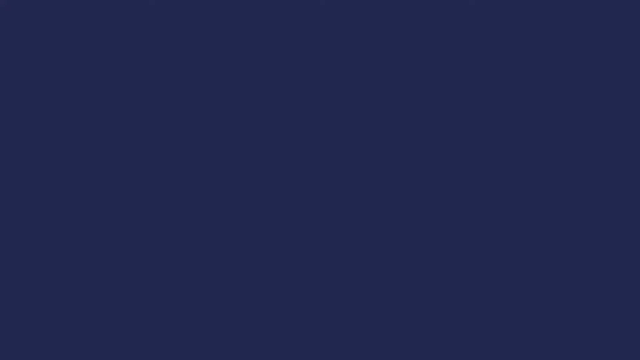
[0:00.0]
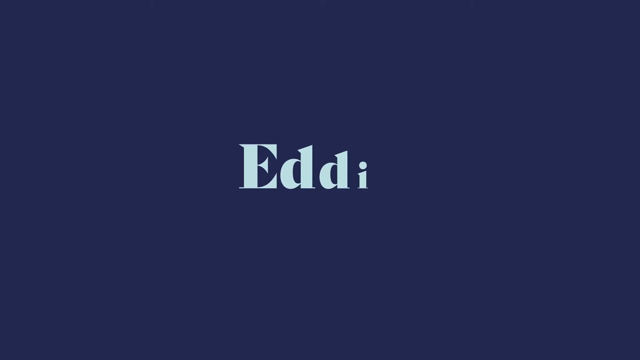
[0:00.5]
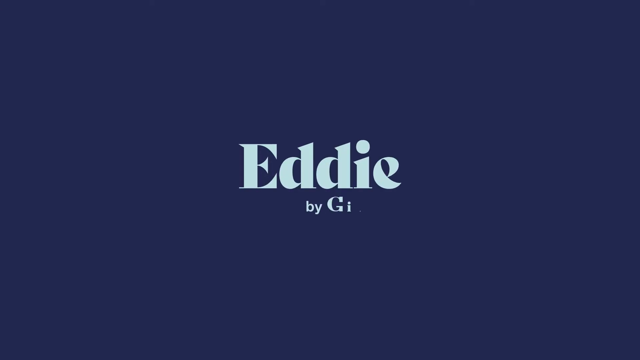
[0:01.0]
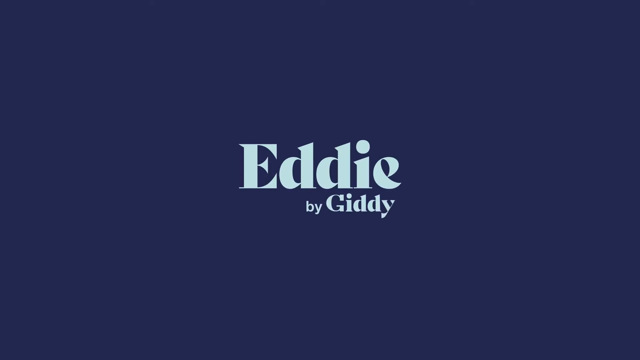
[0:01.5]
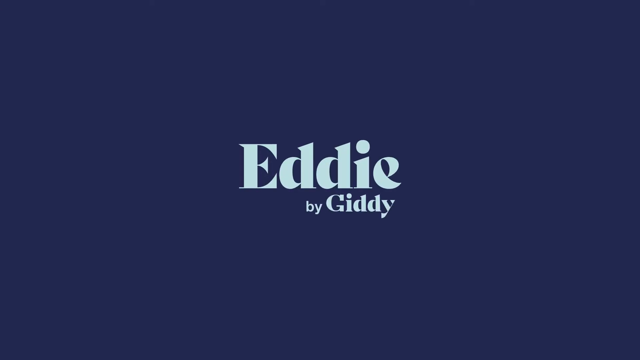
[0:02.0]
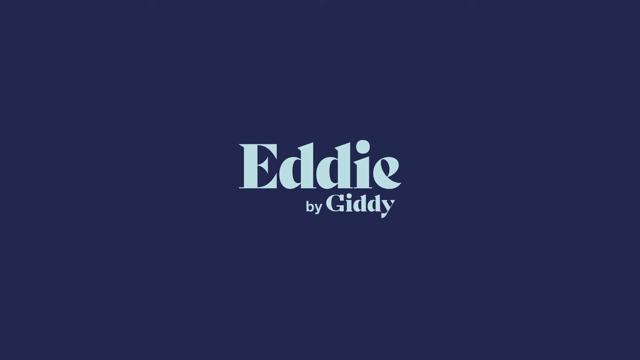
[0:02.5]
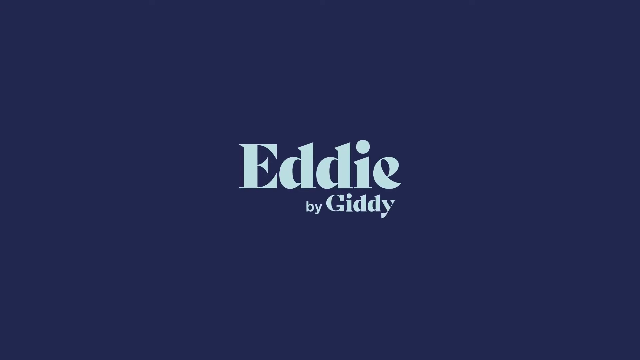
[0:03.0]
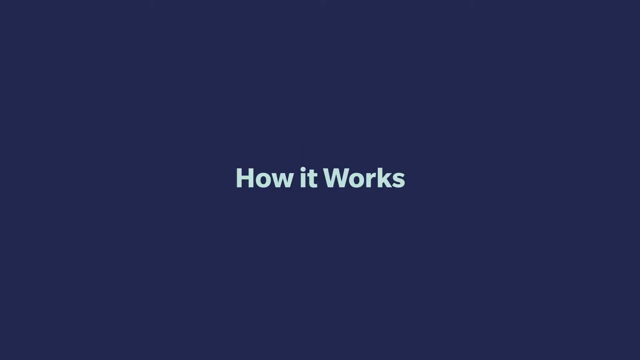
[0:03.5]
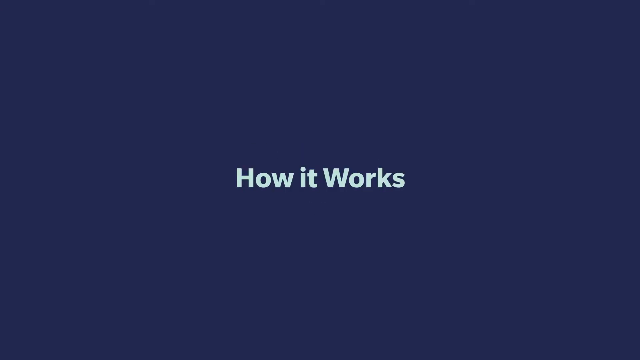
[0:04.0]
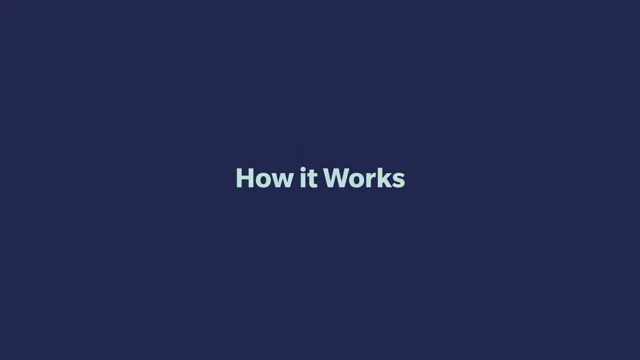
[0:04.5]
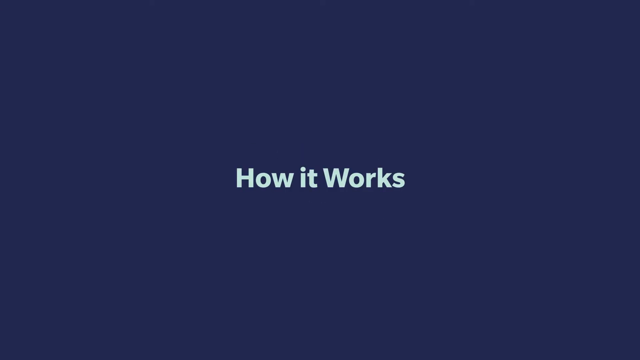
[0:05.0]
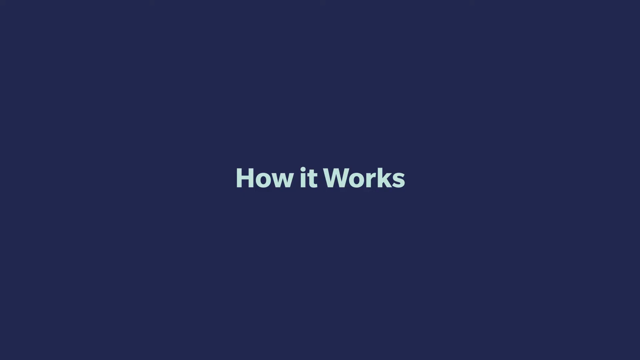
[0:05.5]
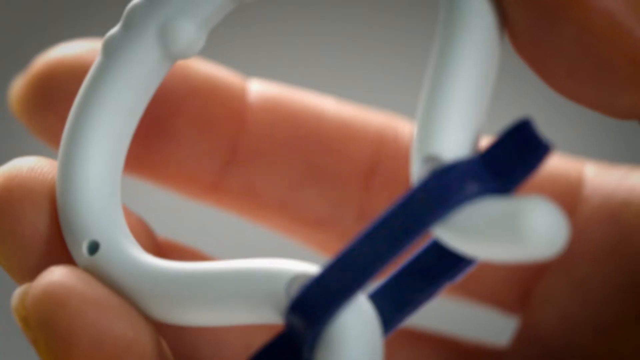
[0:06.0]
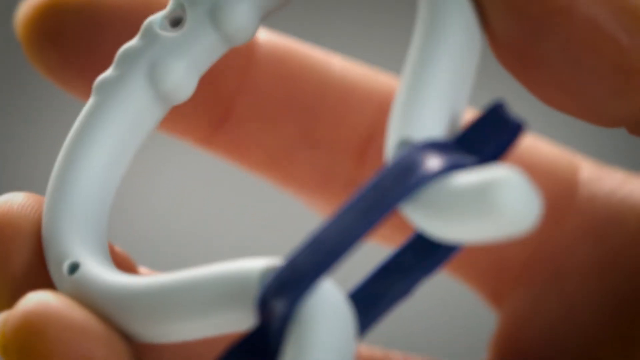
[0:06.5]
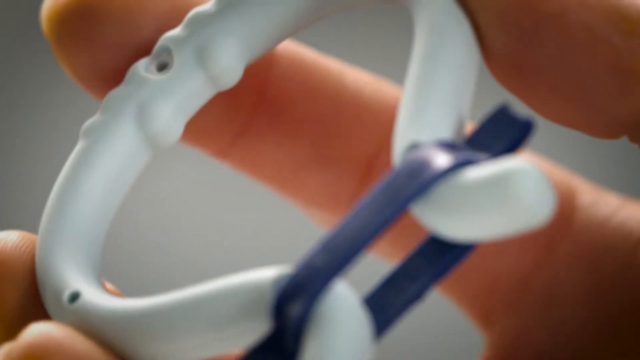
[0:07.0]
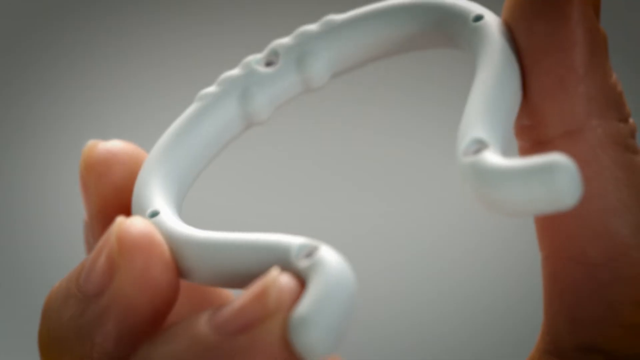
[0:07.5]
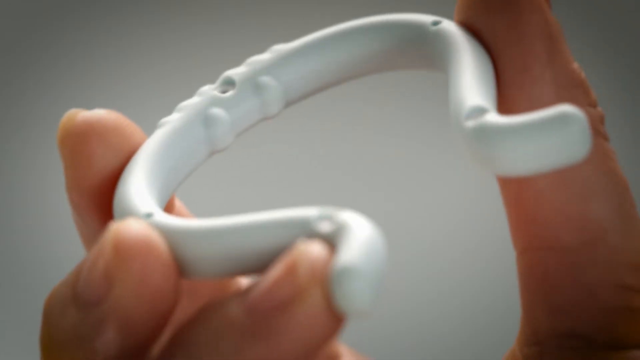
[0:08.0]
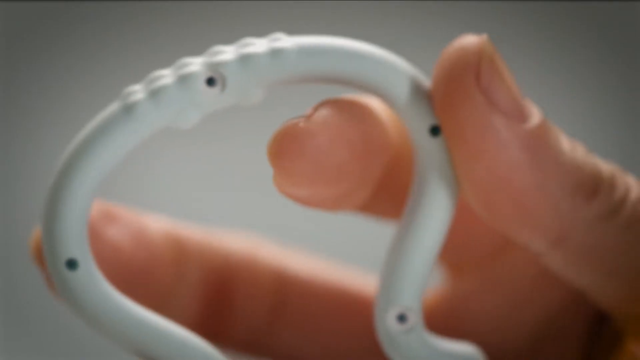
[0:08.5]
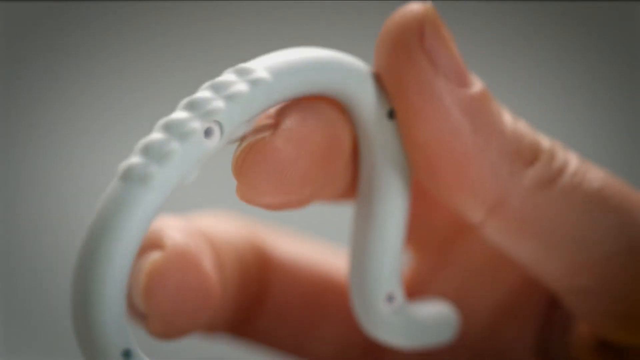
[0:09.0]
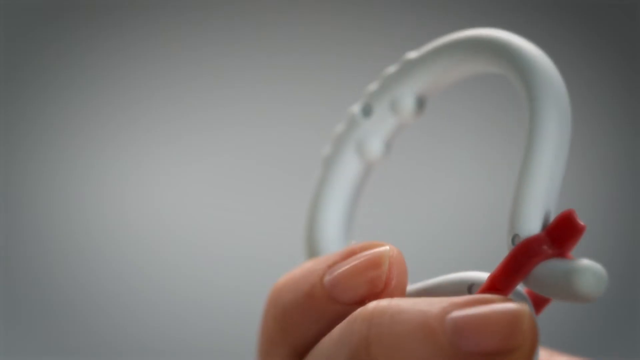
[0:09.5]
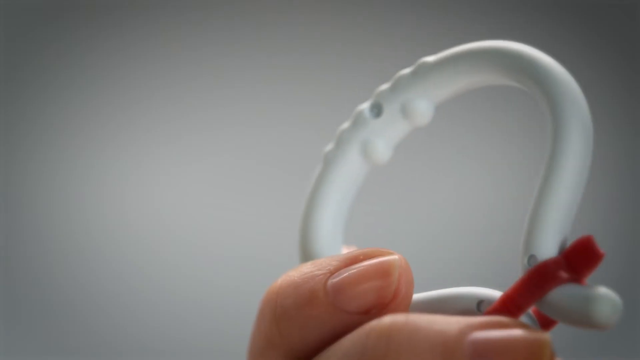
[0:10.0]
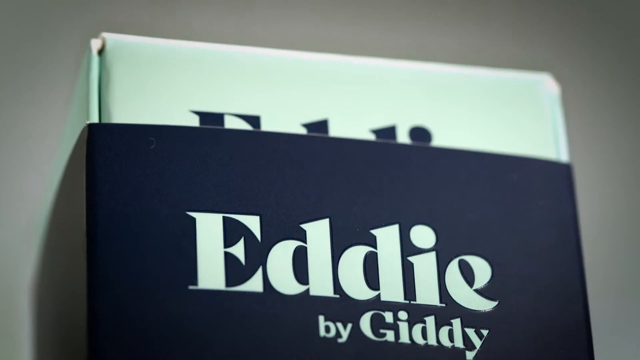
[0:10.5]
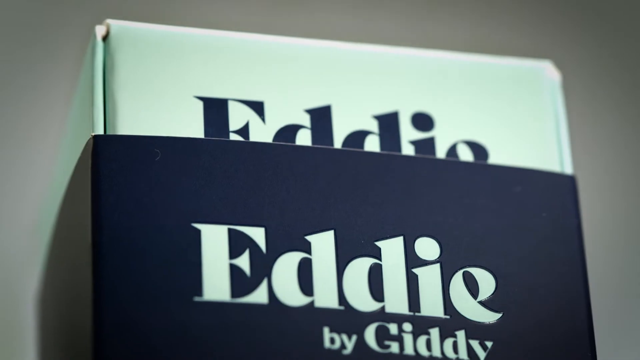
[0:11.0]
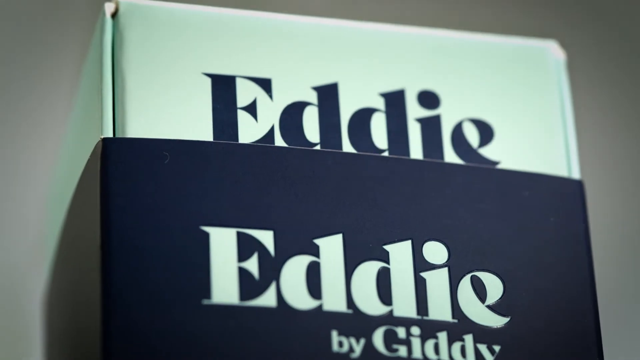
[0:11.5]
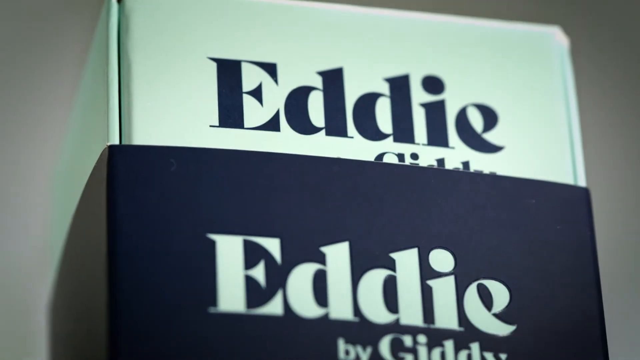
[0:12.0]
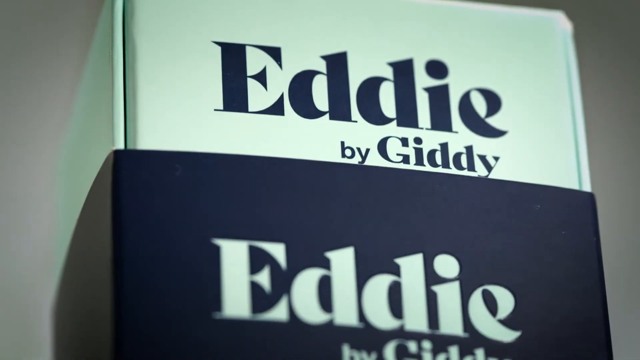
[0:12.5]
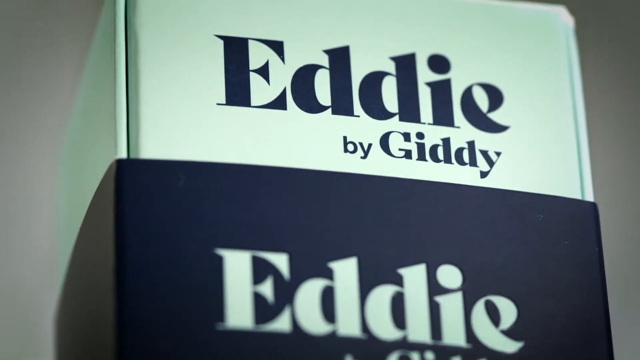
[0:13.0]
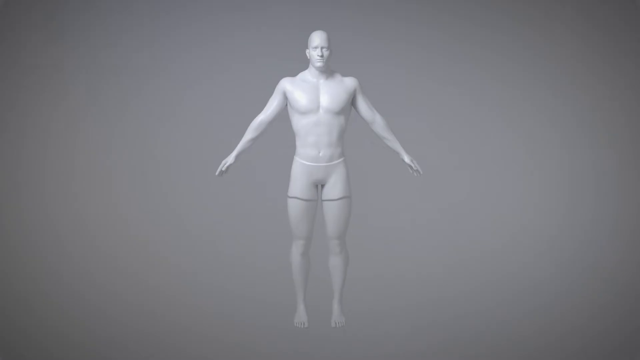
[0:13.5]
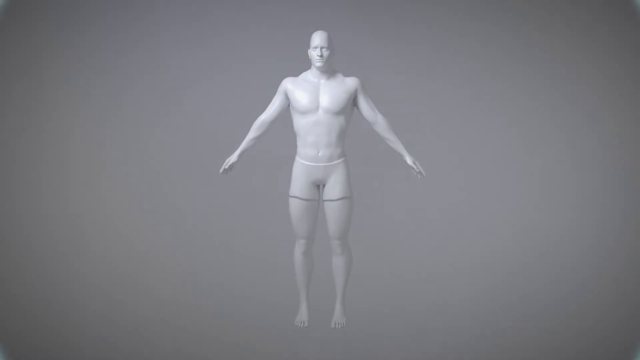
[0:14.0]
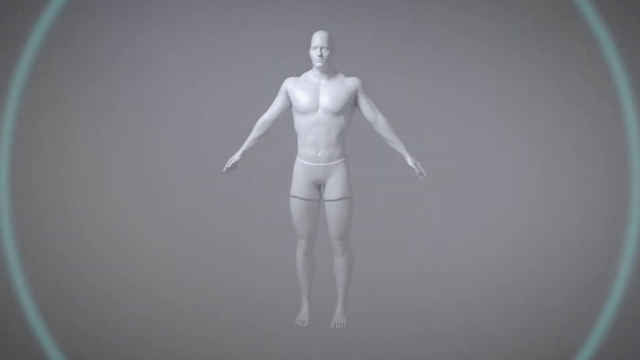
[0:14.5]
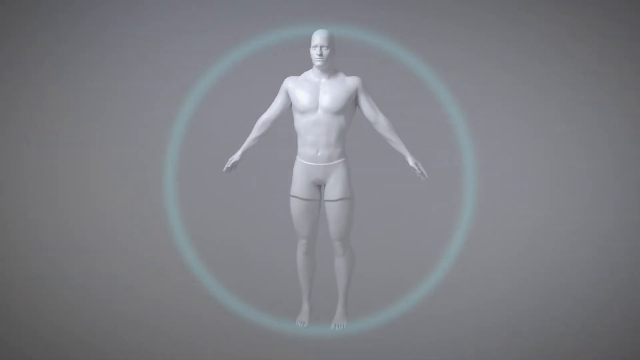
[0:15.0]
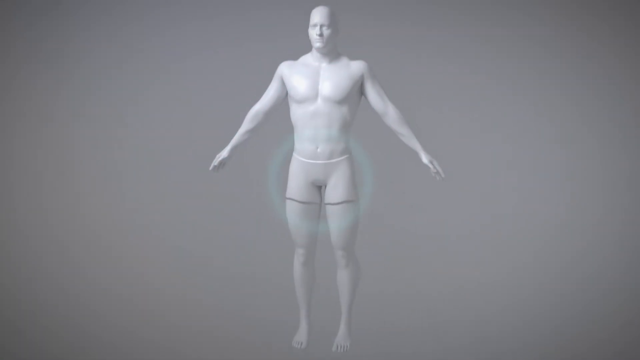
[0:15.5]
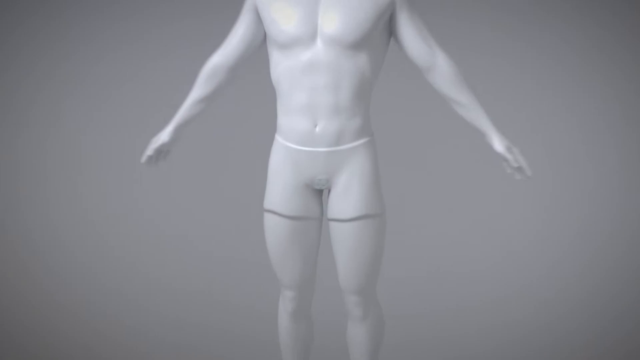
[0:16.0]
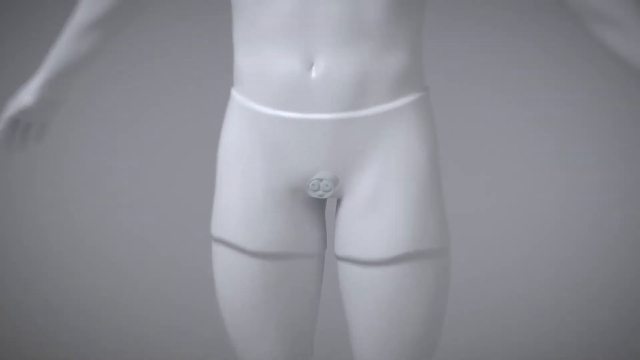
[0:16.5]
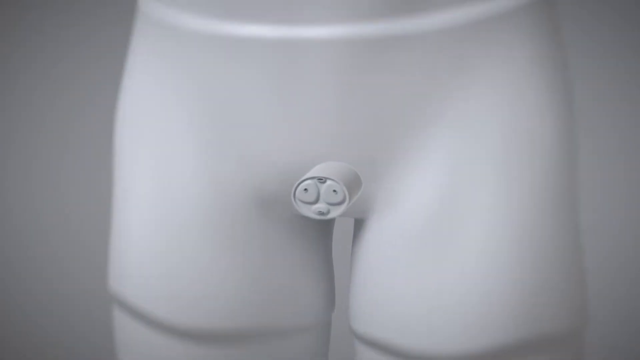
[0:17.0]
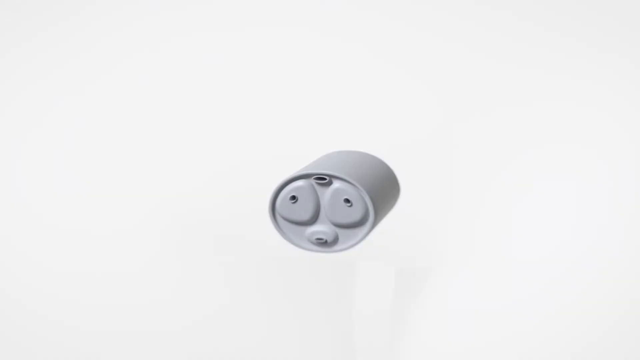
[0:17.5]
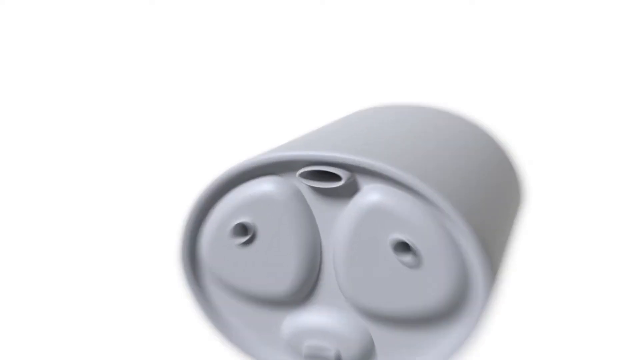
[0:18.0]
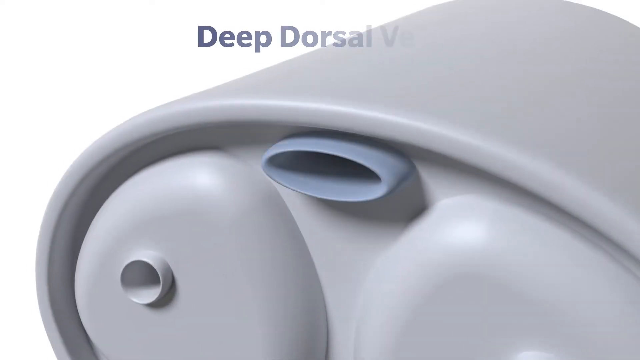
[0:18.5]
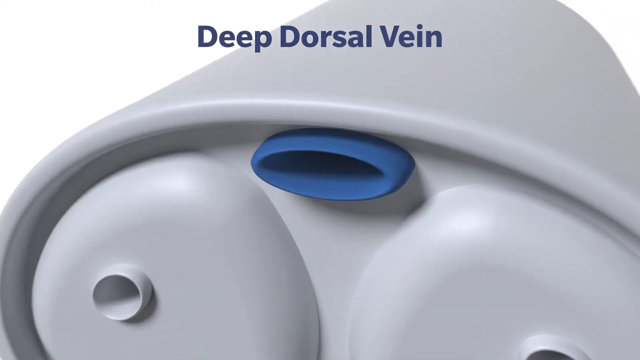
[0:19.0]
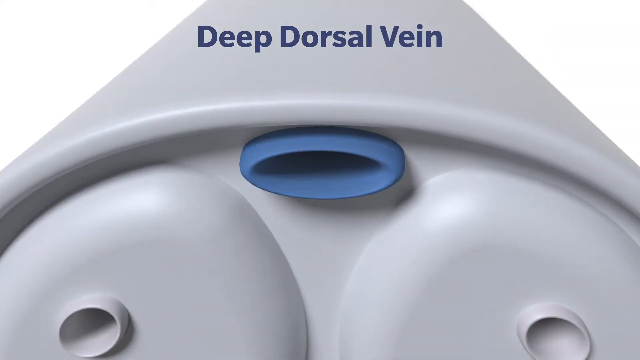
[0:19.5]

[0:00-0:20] The video is about the Eddie by Giddy system, which apparently has to do with erectile dysfunction. It opens with an animated Eddie by Giddy logo in white letters on a black background. Text reads "how it works," and then a white tool appears, kind of like a shower curtain holder or a horseshoe-shaped thing, with a black coupling that holds the horseshoe ends together. The device is shown as white and plastic-like. A mannequin appears, and the view zeros in on the groin area, where an illustration shows some of the blood vessels coming in and out of that area. There is what looks like a device implanted in the body, though it may just be part of the mannequin.